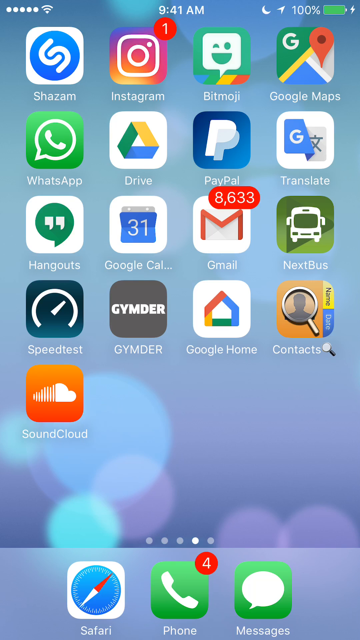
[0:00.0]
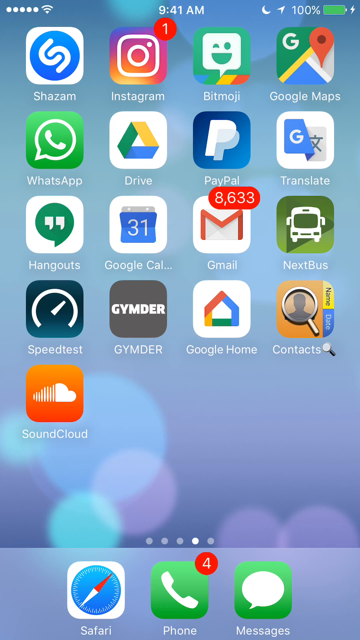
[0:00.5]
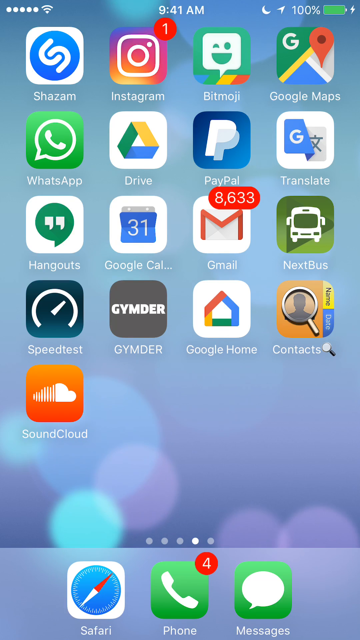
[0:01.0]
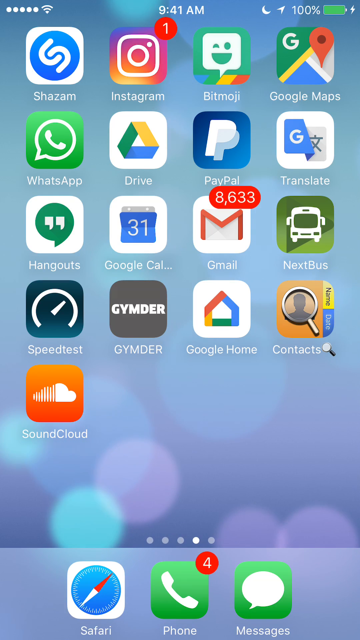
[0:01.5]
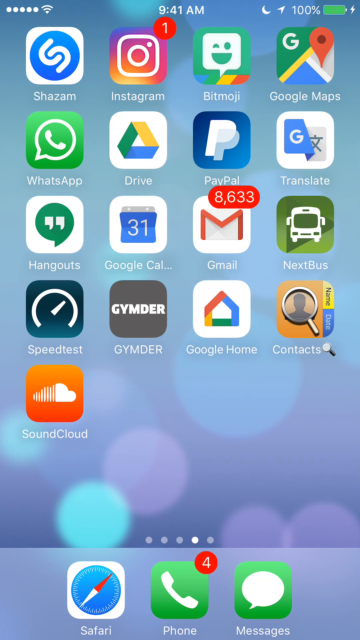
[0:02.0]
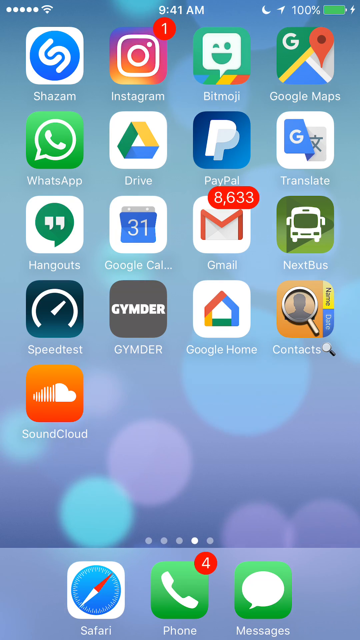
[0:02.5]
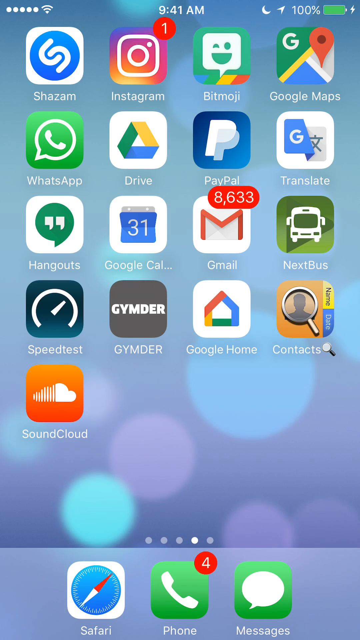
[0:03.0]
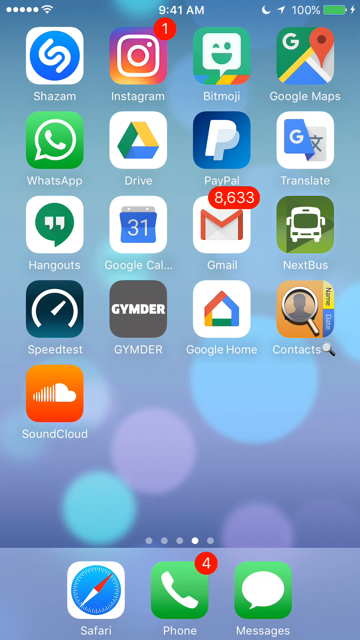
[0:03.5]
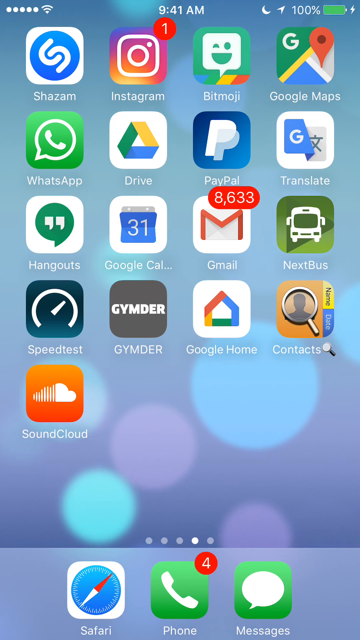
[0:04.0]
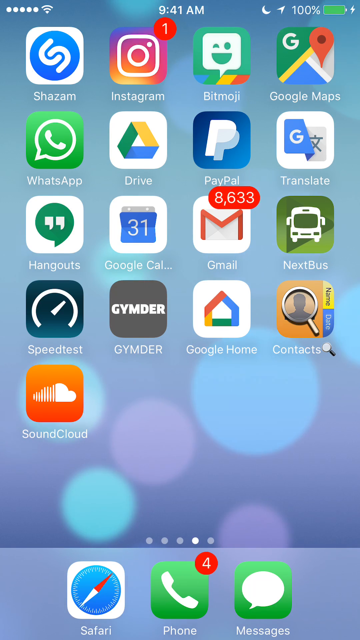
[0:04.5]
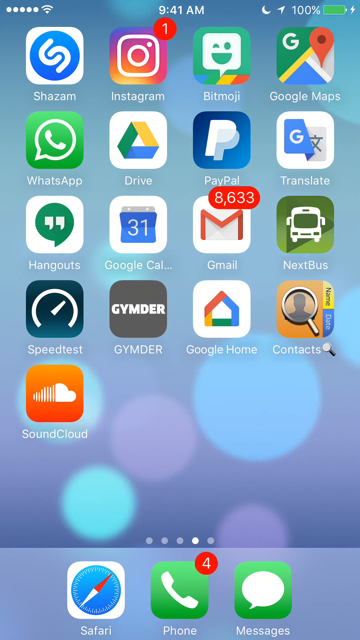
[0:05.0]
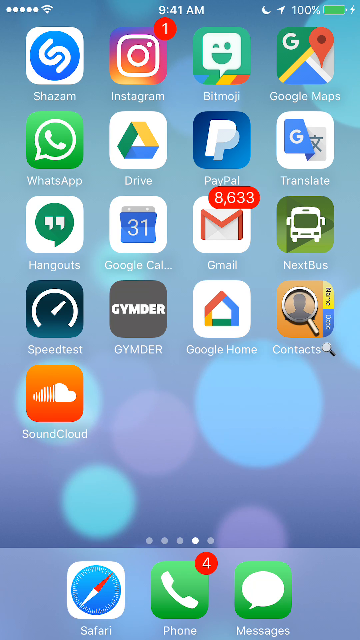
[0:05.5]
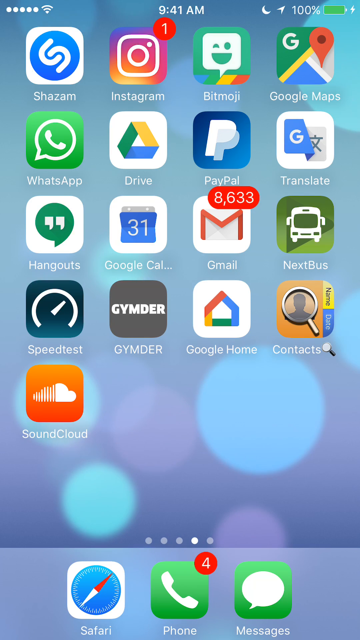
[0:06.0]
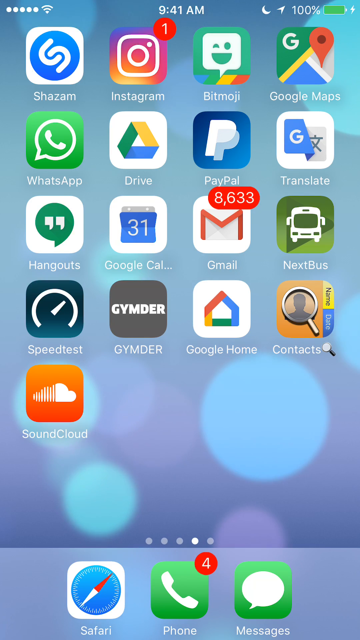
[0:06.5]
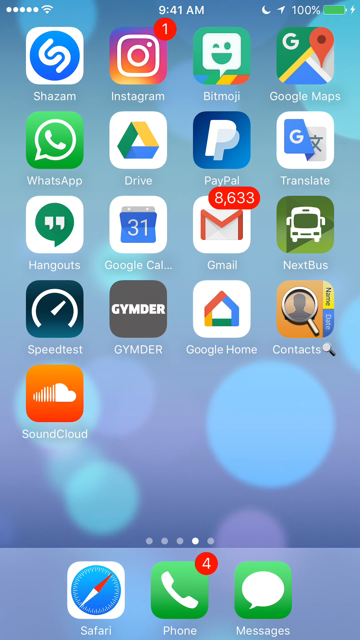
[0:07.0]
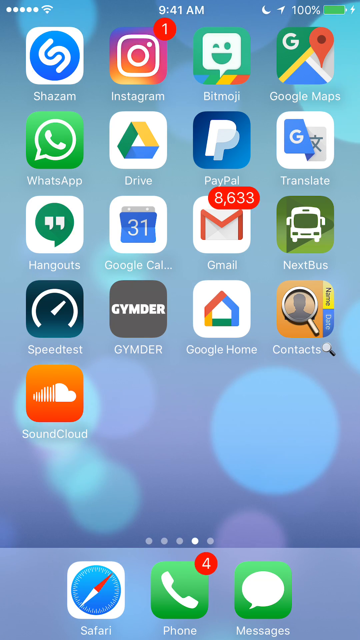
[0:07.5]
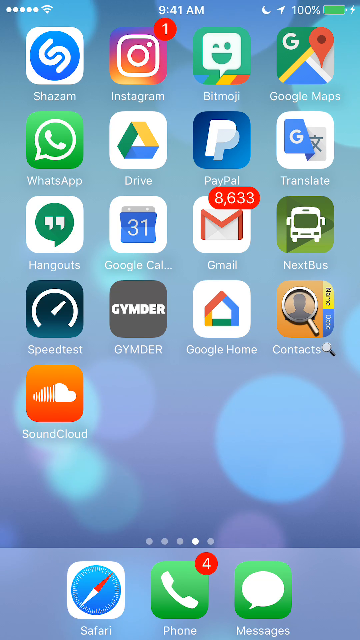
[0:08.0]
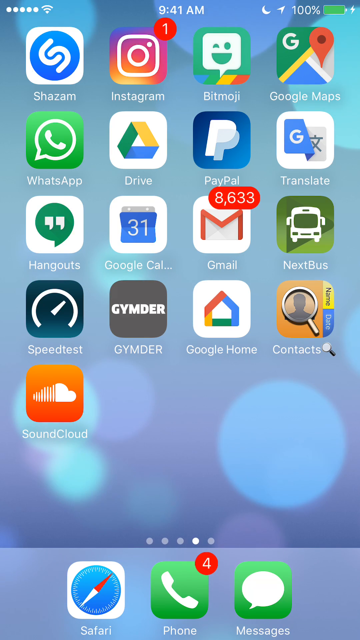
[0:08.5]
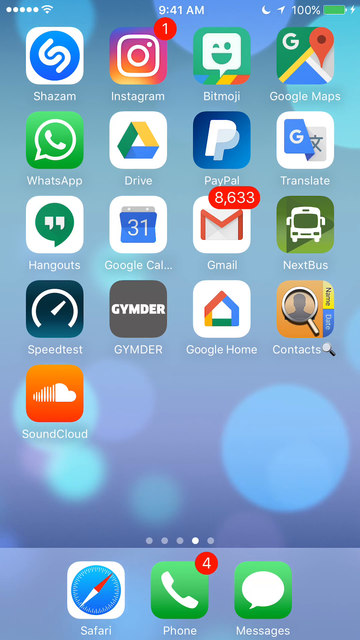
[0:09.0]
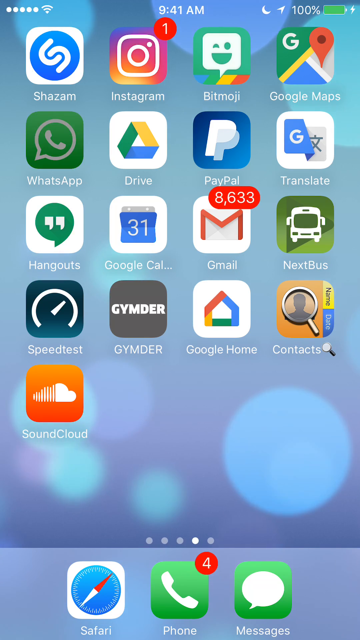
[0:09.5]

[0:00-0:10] The home screen of an iPhone shows about five rows of icons on a blue and white background, with moving translucent circles in blue, light blue, darker blue and purple behind them. The top row, from left to right, holds Shazam, Instagram, Bitmoji and Google Maps. The second row holds WhatsApp, Drive, PayPal and Google Translate; the third holds Hangouts, Google Calendar, Gmail and Next Bus; the fourth holds Speedtest, GYMDER, Google Home and Context; and the fifth row has SoundCloud. At the bottom are the Safari app icon, a green phone icon with a white handset in the center, and to the right a green message icon. At the top right of the screen the battery reads 100% and the time is 9:41 a.m. After a few seconds on this screen, the view transitions to what looks like a web browser with a white background.